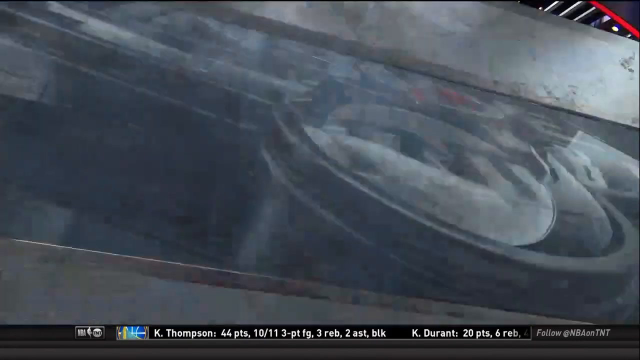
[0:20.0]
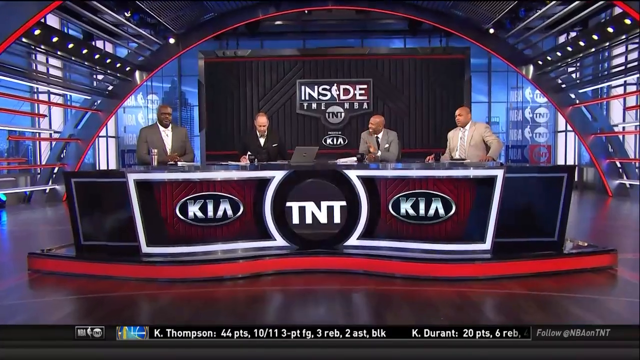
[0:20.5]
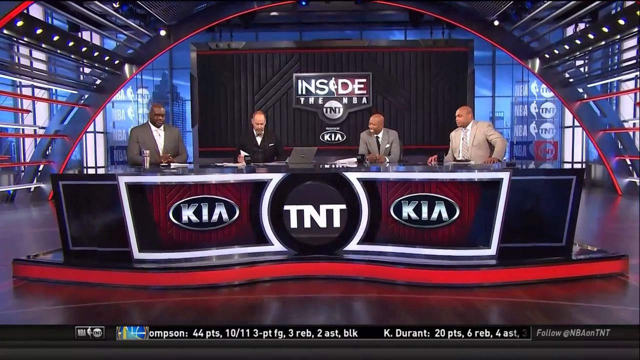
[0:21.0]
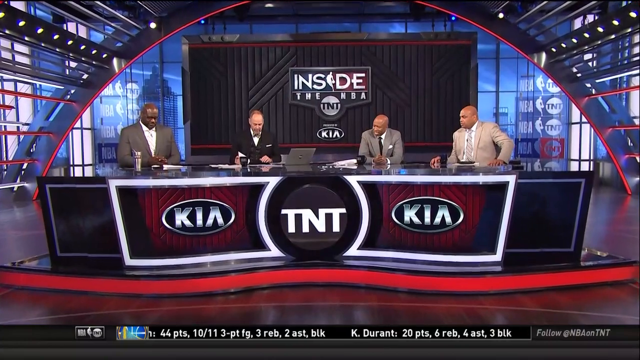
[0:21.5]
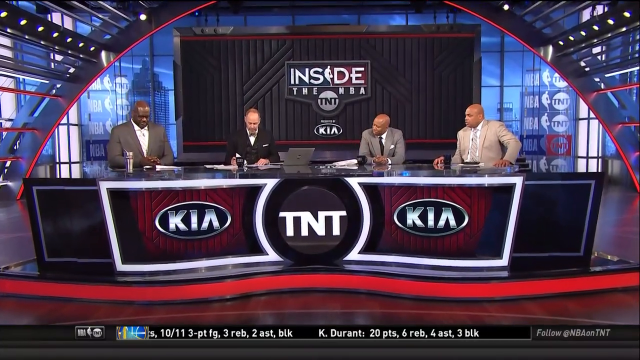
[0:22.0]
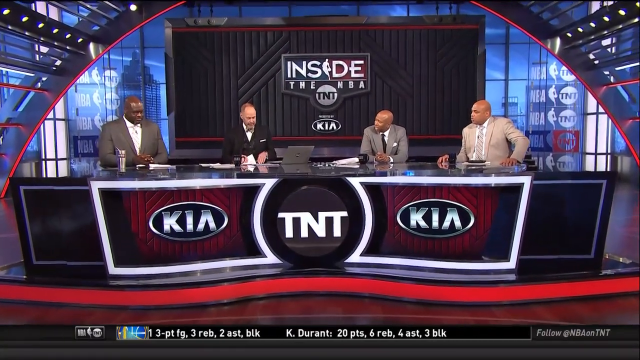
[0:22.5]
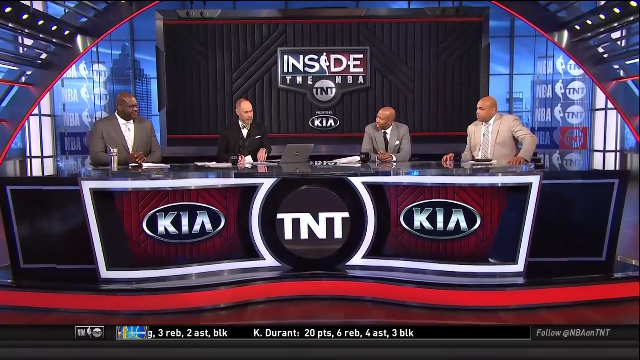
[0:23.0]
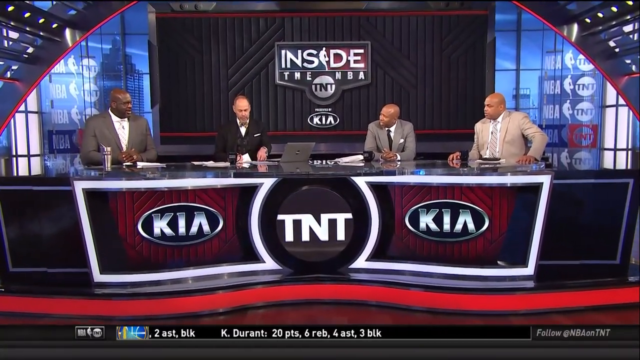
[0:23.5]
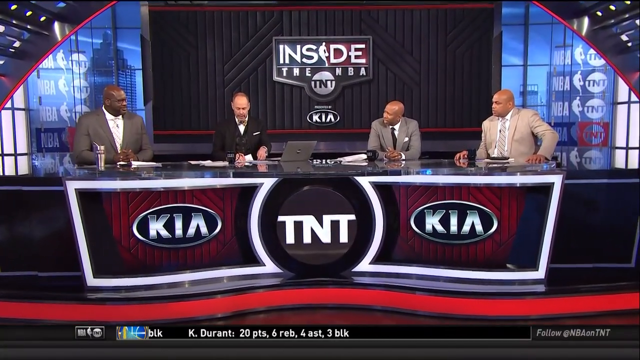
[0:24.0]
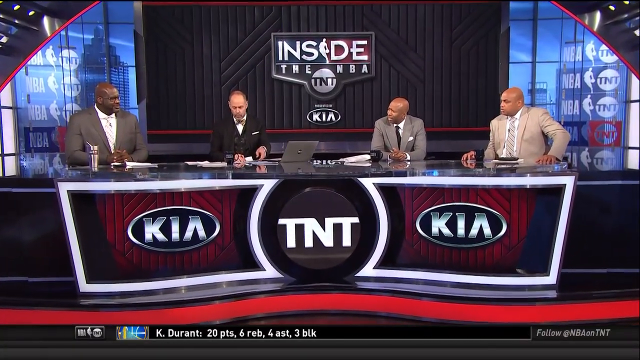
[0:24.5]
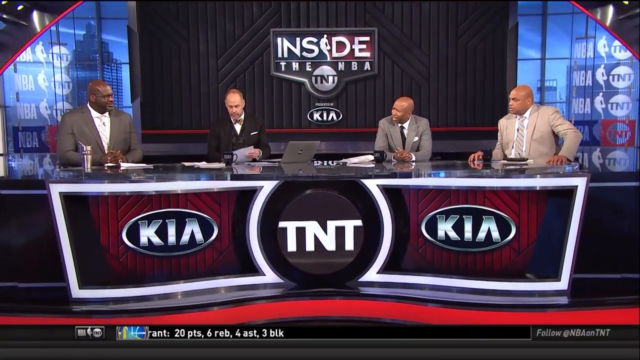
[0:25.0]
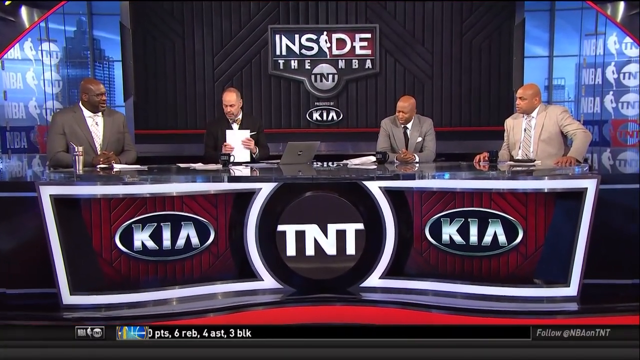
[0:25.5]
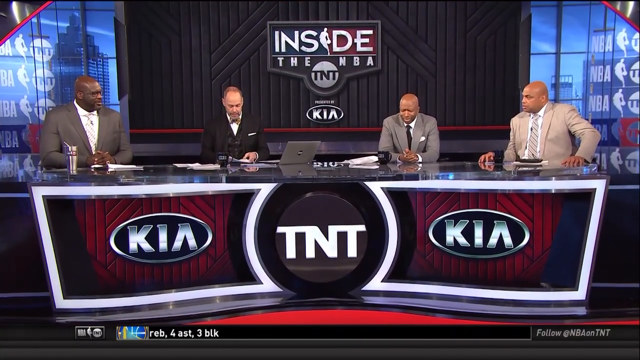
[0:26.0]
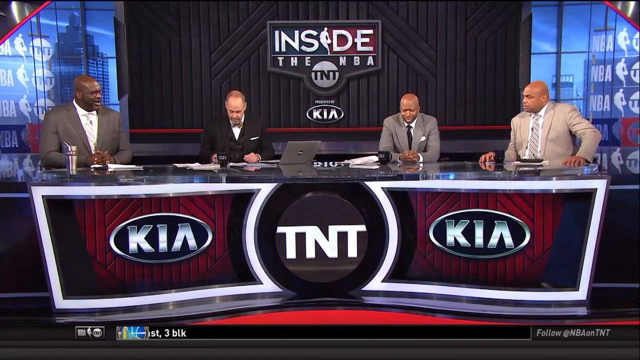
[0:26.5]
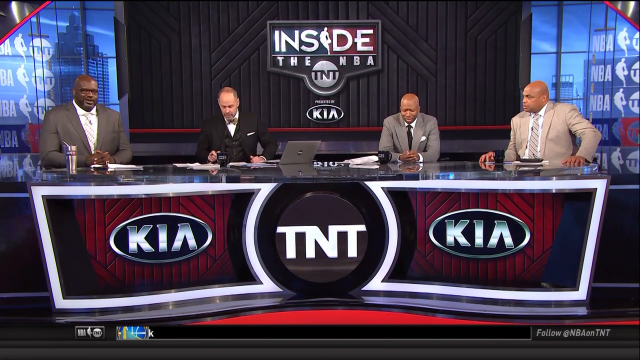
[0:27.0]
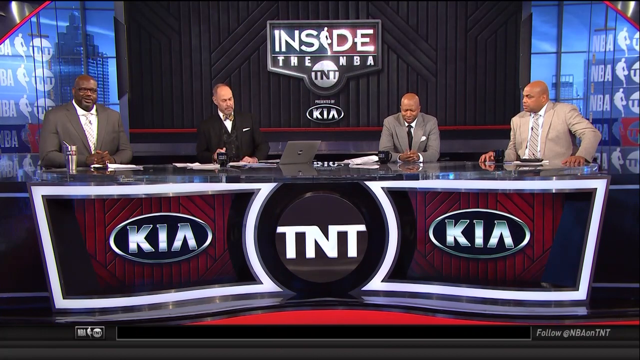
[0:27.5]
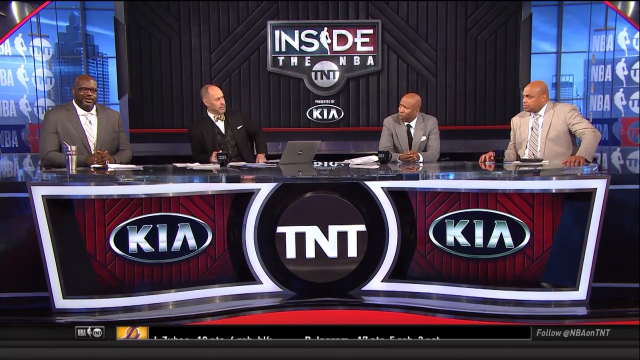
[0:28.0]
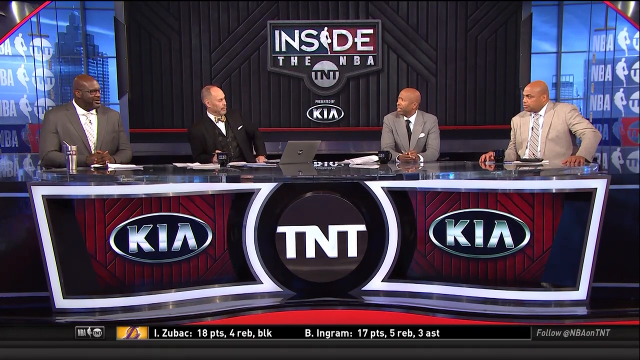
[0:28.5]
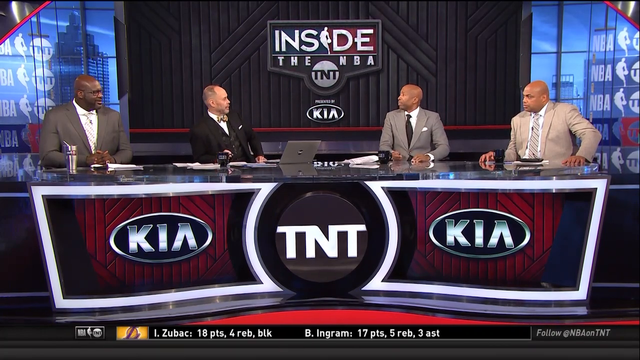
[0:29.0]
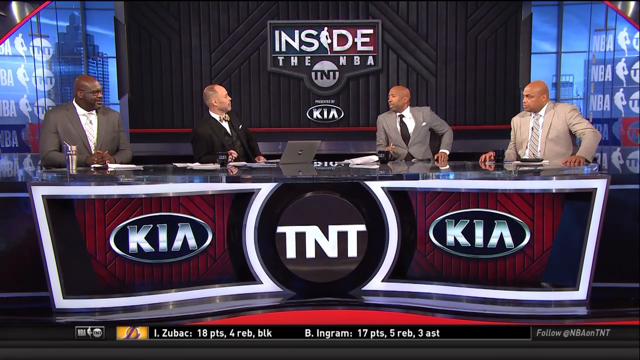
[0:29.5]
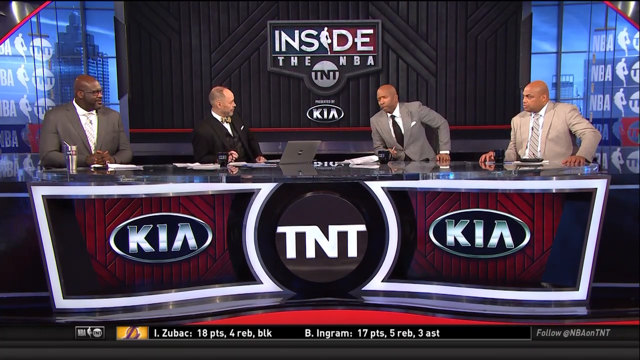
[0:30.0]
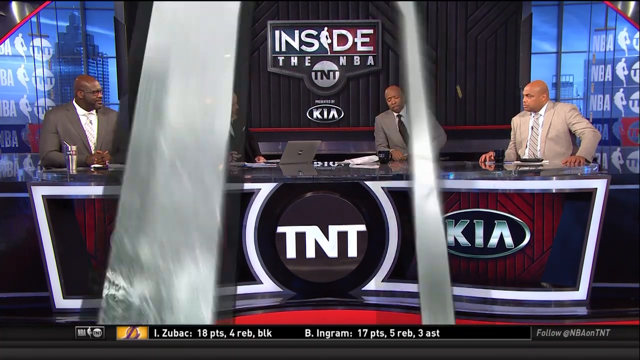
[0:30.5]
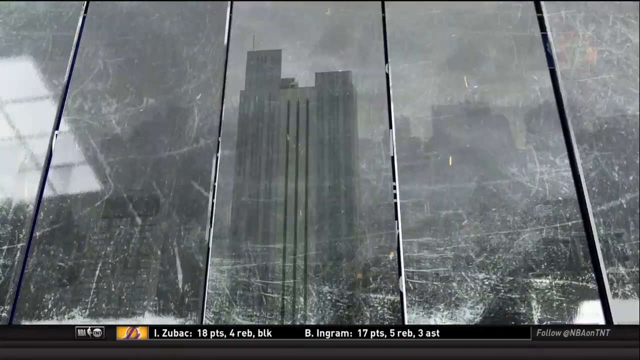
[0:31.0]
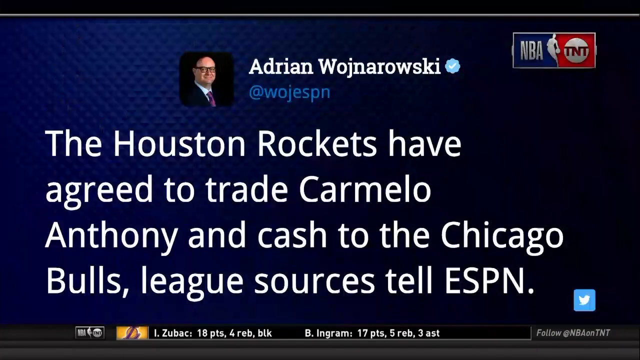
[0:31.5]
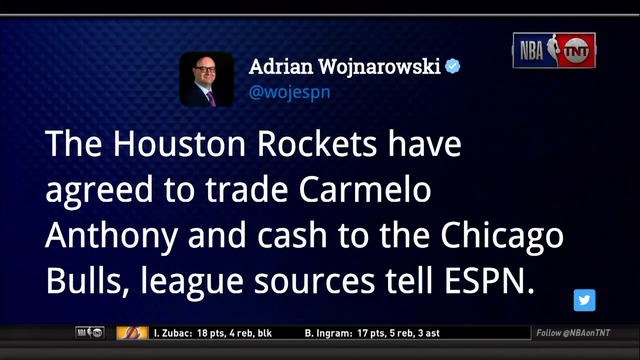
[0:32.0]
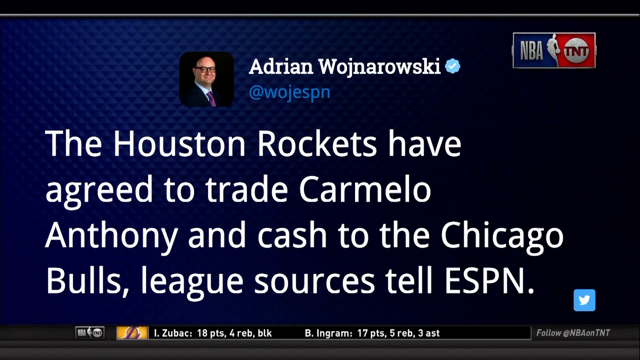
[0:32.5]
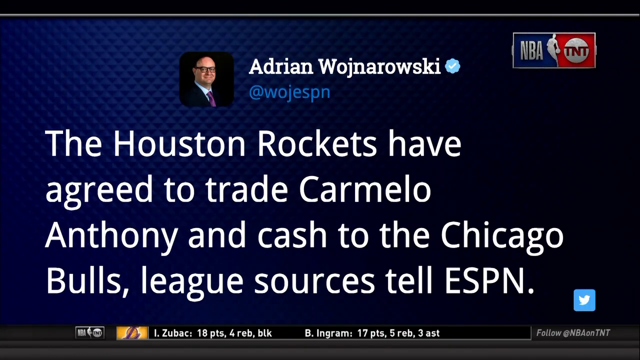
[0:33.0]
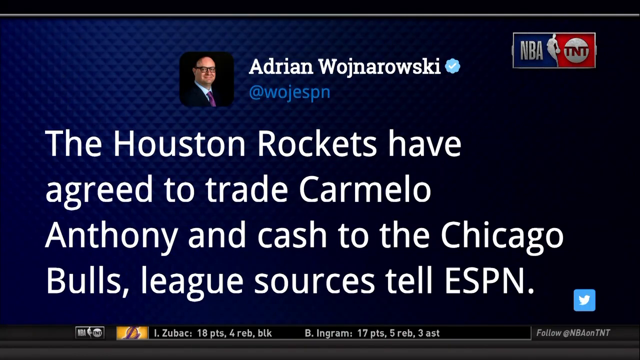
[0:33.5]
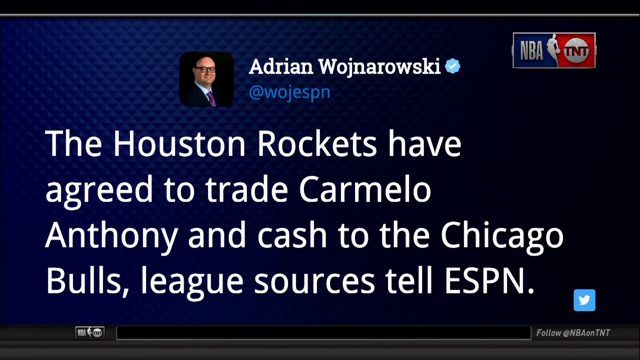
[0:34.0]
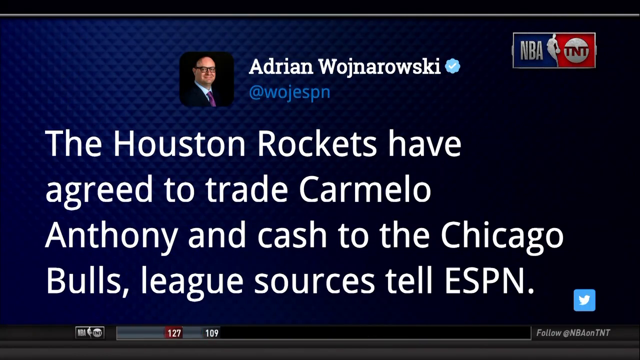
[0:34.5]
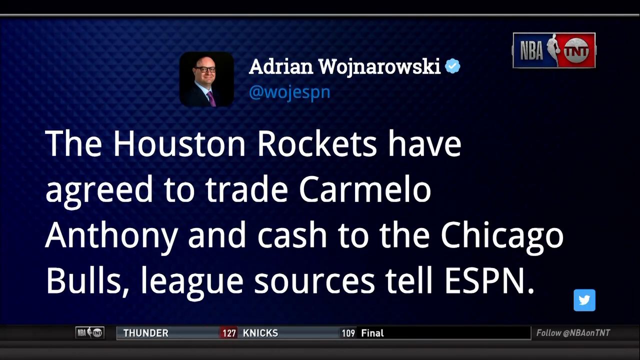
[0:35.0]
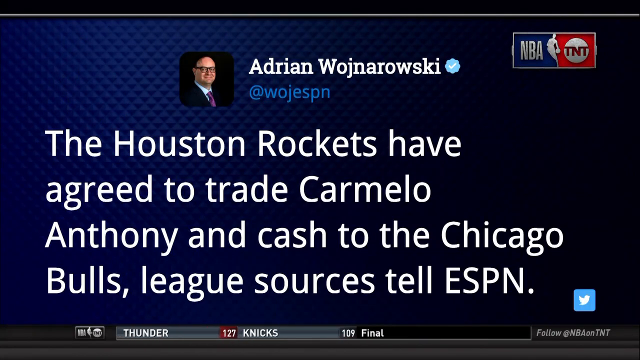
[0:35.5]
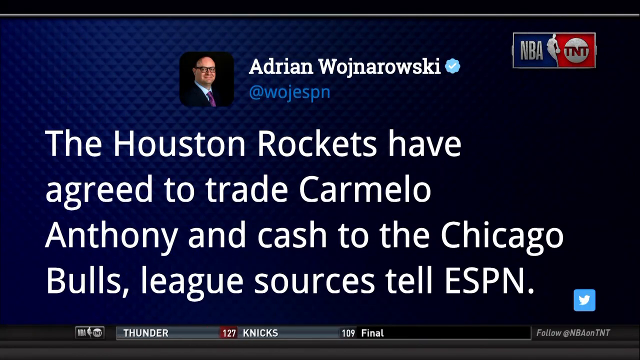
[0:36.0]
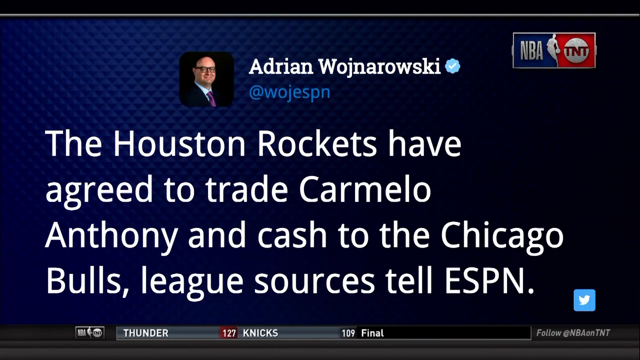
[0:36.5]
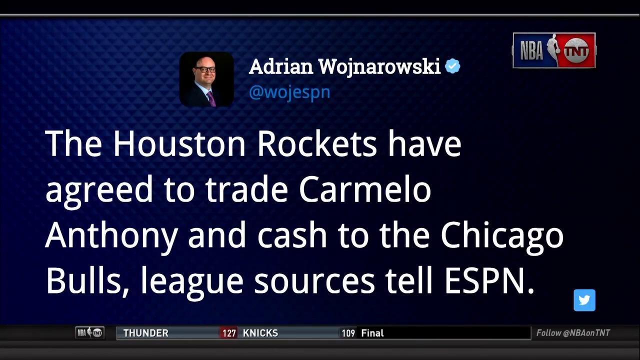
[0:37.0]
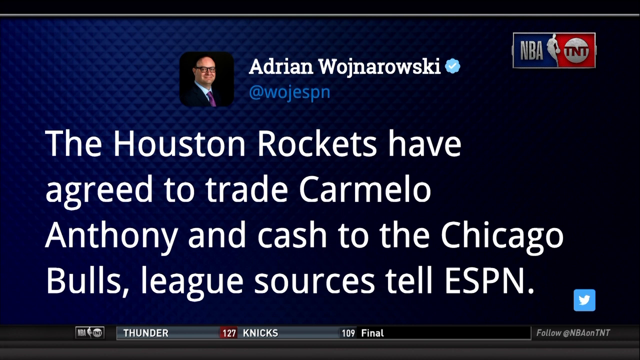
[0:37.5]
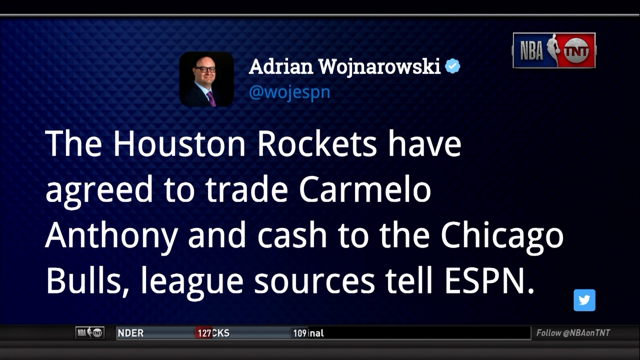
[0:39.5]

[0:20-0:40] A TV studio shows a long black desk in the middle of the screen. Along the front of the desk is a big white outlined square with a red square inside it, and in the middle of that is "Kia" in a black oval; the same appears on the right side of the desk. In the middle of the desk is a black circle with the letters "TNT" in white across it. Beneath the desk, a red line runs from the left side of the screen all the way off the right side. Sitting at the desk, starting on the left, is a black man in a gray suit, white shirt and yellow tie. To his left is an almost bald man in a black suit, white shirt and bow tie. To that man's right is a black man in a gray suit, white shirt and black tie, and to his right is a black man in a tan suit, white shirt and tan striped tie. On the black wall behind them is a square containing the word "inside" with "the NBA" underneath, in white, and below that a silver circle with the letters "TNT" inside.